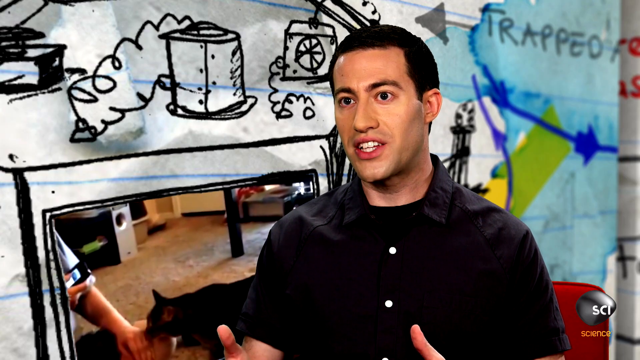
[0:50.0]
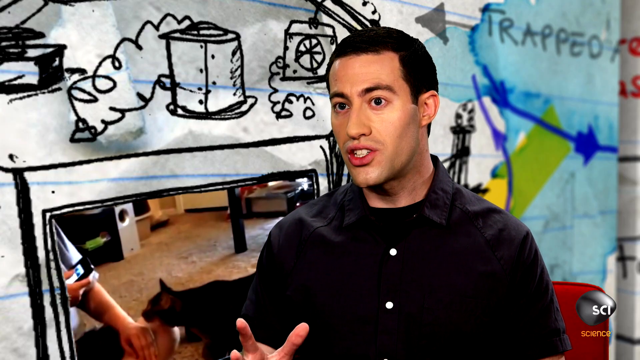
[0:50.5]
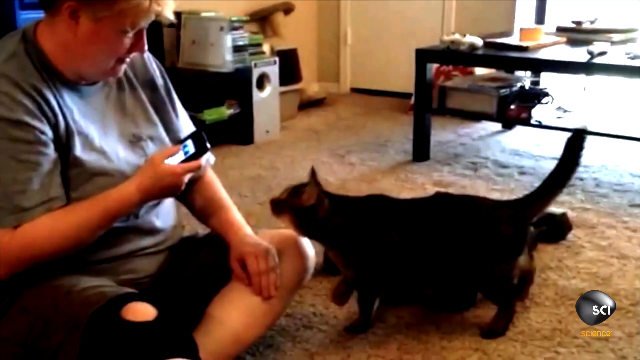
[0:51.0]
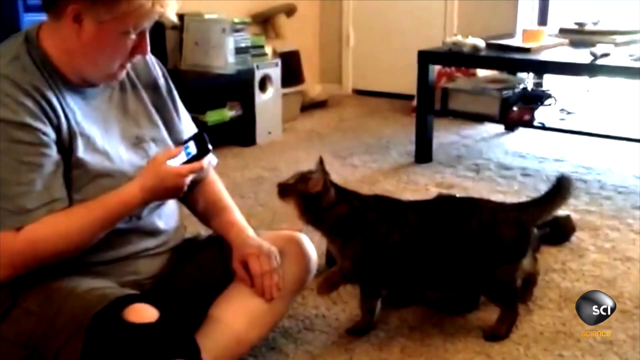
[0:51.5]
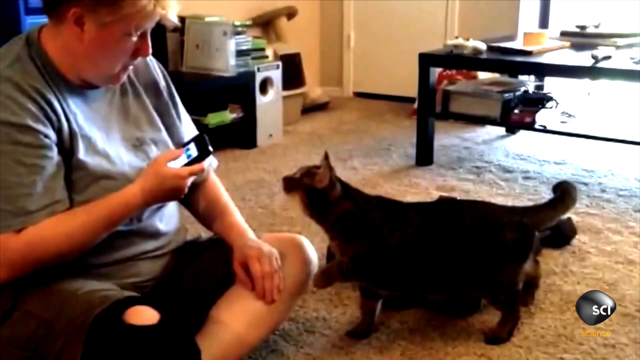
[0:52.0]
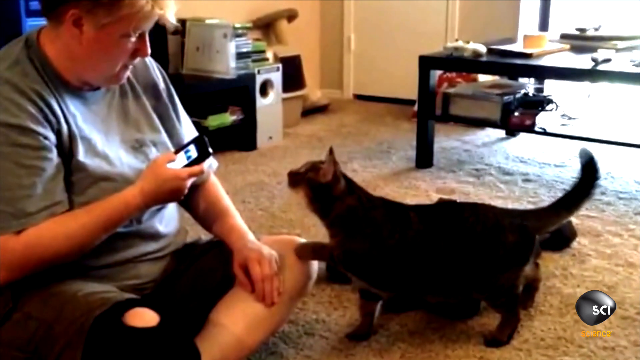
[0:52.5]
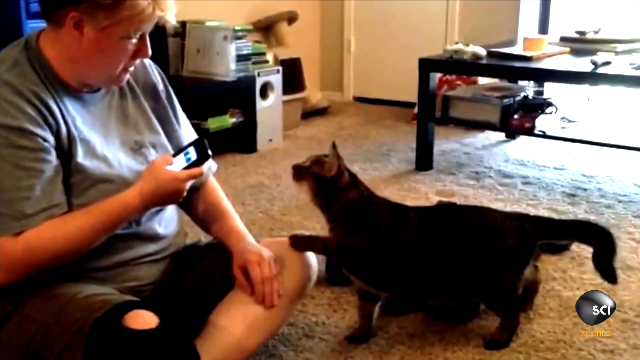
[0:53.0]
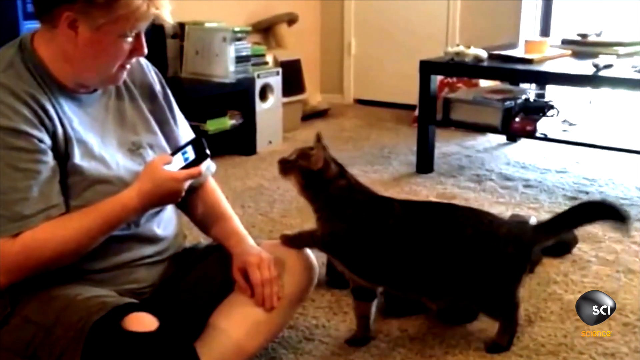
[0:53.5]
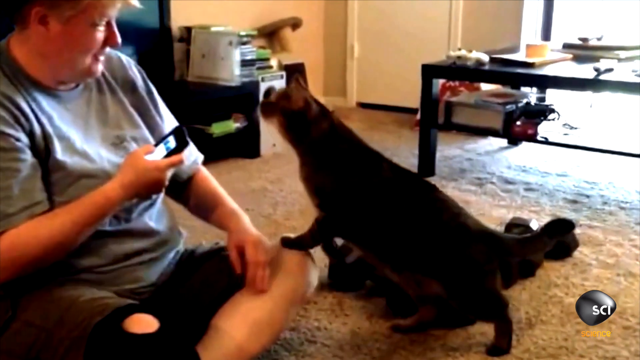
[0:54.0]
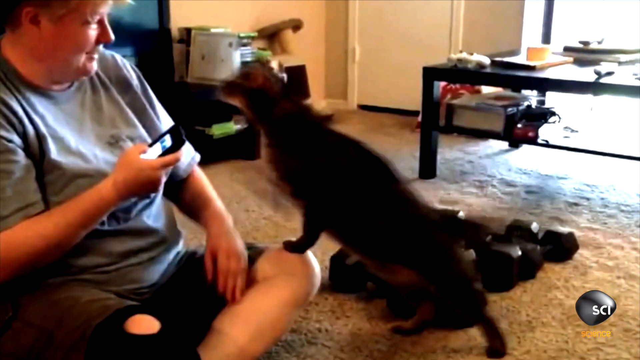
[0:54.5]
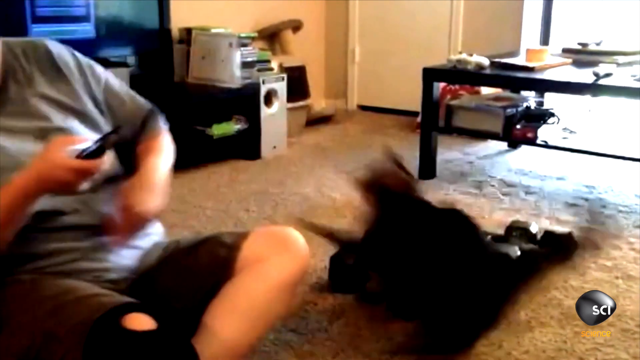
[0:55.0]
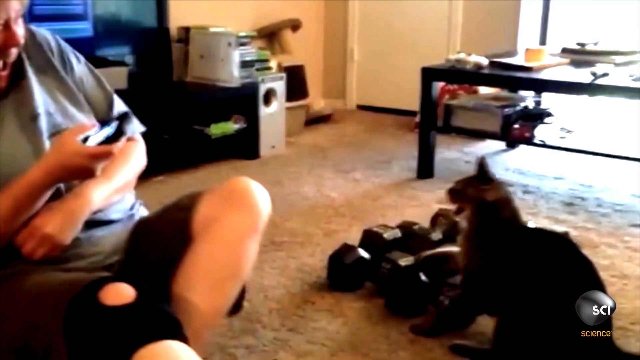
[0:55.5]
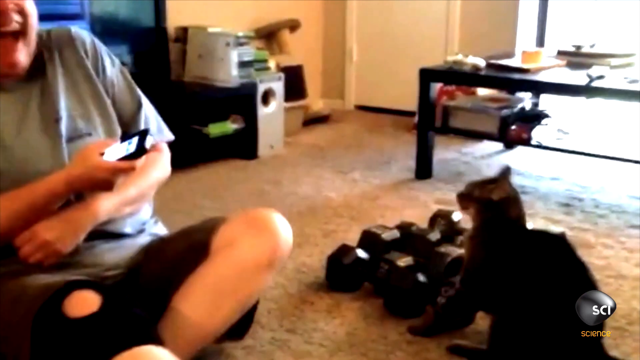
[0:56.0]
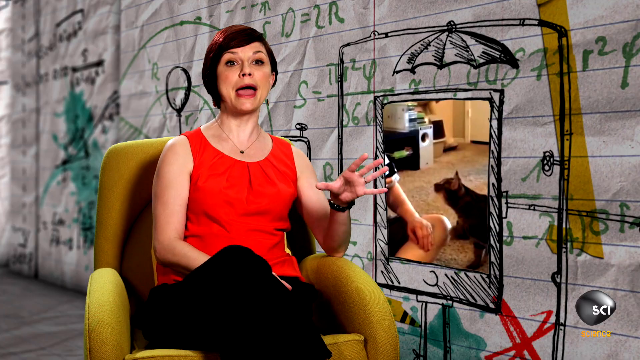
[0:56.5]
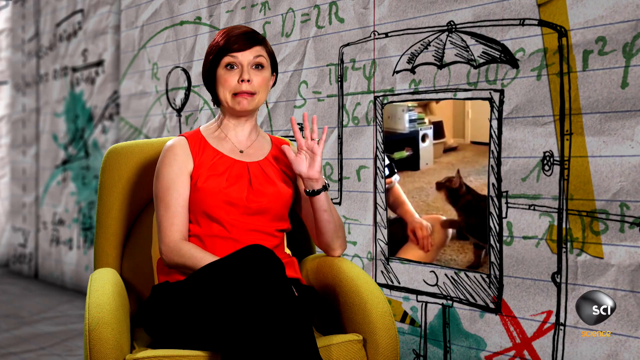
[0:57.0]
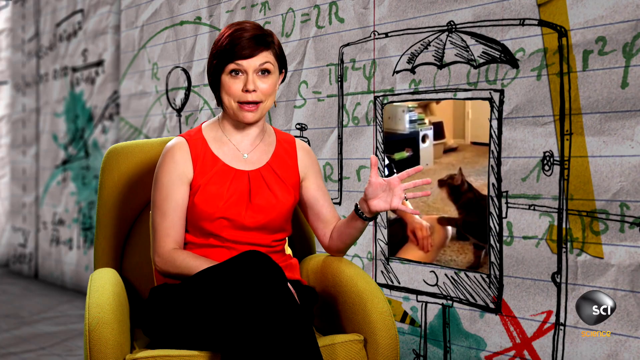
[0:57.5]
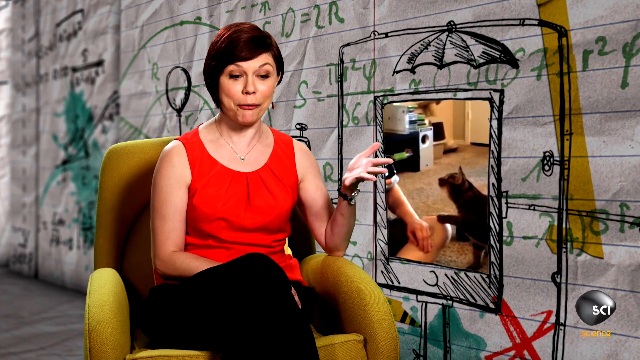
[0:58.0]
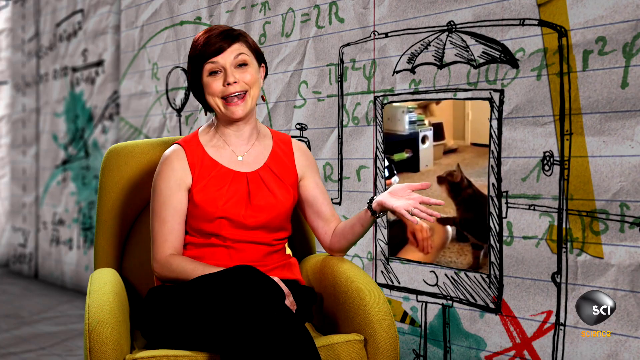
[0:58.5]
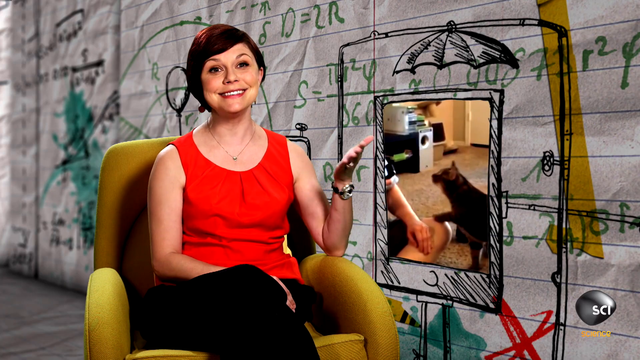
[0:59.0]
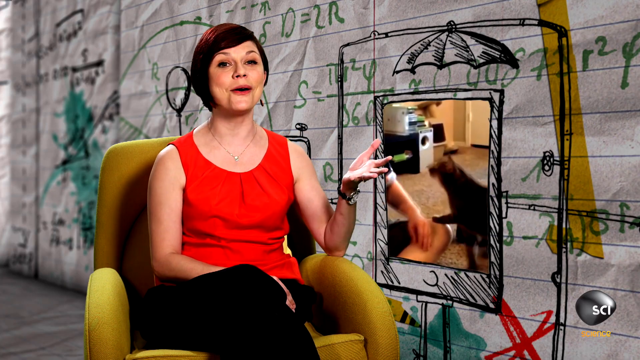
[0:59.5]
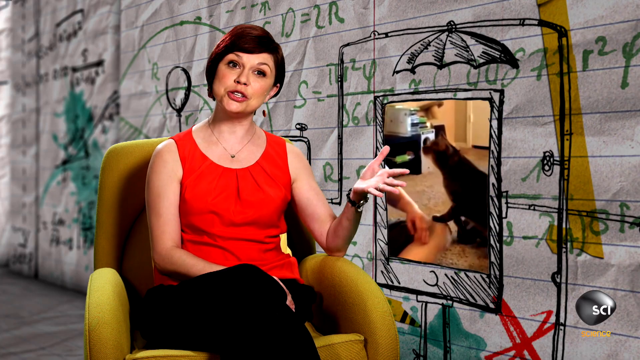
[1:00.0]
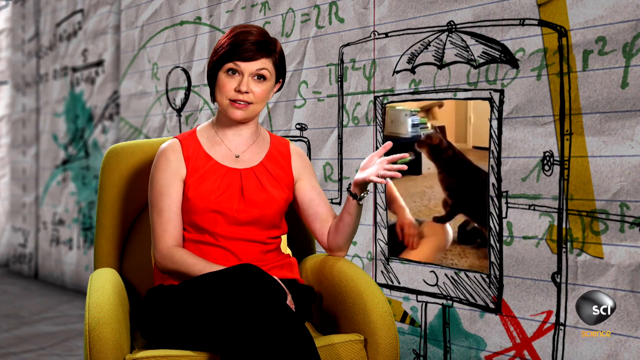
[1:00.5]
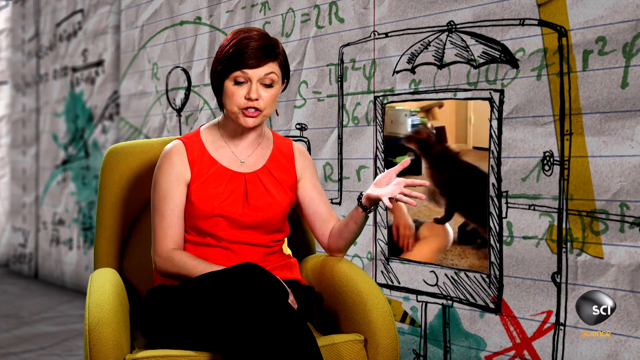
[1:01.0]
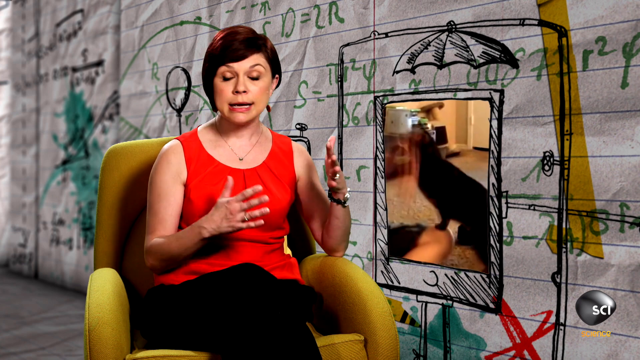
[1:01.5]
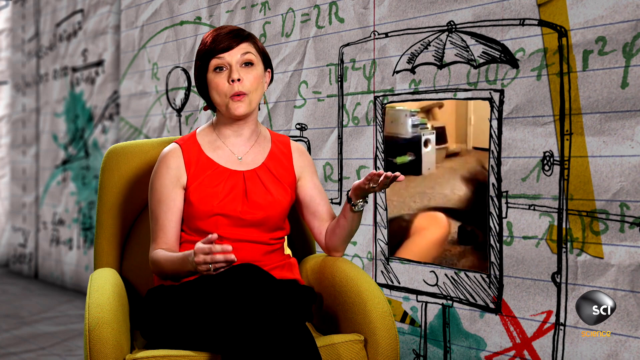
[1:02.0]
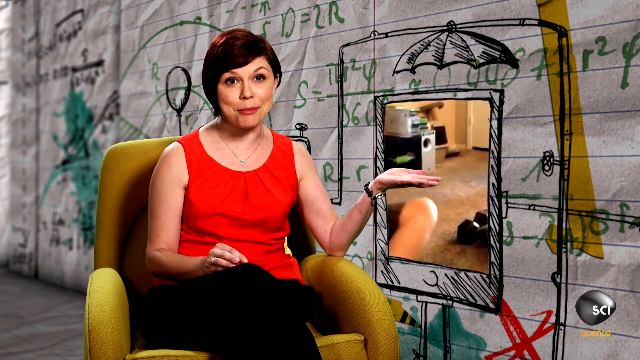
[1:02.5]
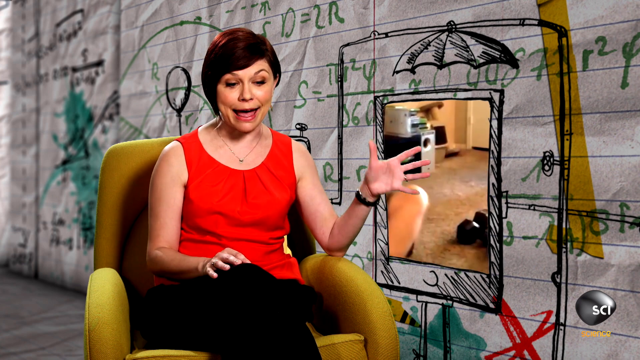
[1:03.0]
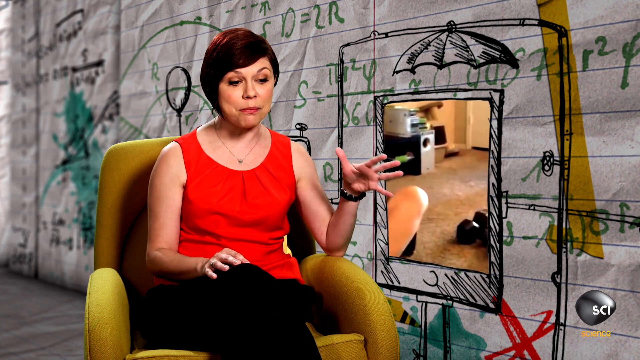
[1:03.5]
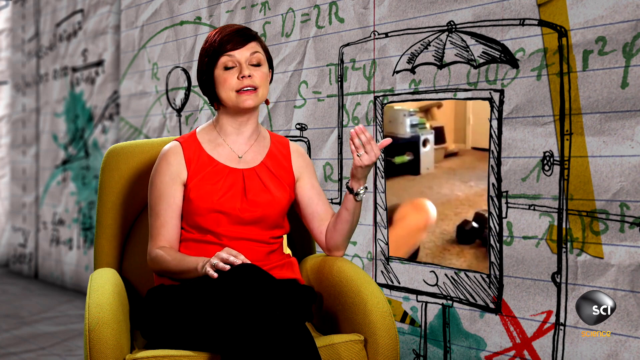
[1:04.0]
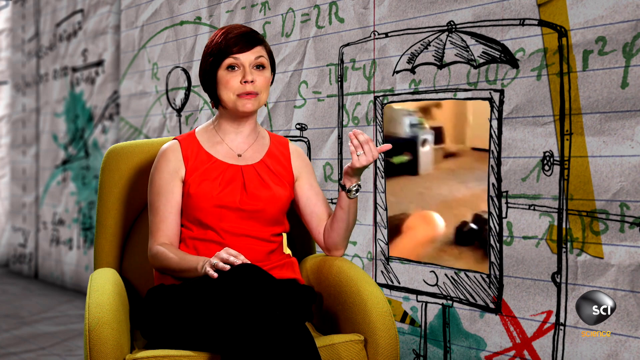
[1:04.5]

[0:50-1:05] The footage of the woman and the cat is re-examined, repeating at several points the moment where the cat reaches up and attacks its owner. The experts give commentary on the situation. The woman in the red blouse appears very disappointed and almost seems to laugh at several points, almost appearing to laugh in disbelief. The cat is shown several times climbing up on its owner and slapping her as she uses her arm to push it away, and then the cat retreats into the background. The walls of the living room are painted tan to match the tan carpeting. Behind the experts appears to be wallpaper based on doodles made on lined notebook paper, and several doodles seem to frame the video of the cat attacking its owner, which plays in the background as the experts speak.